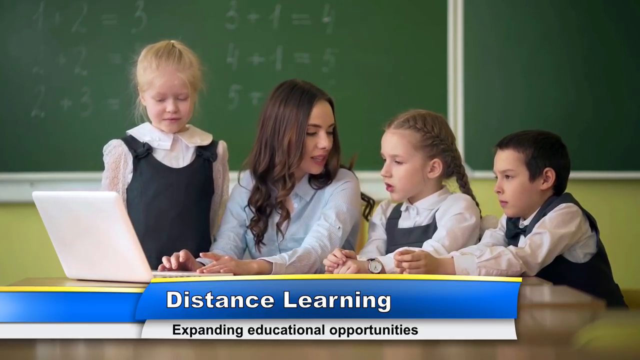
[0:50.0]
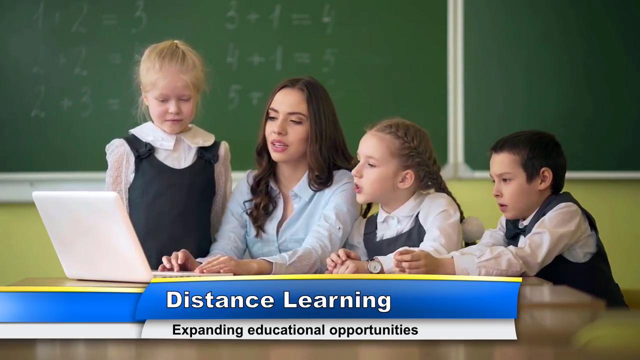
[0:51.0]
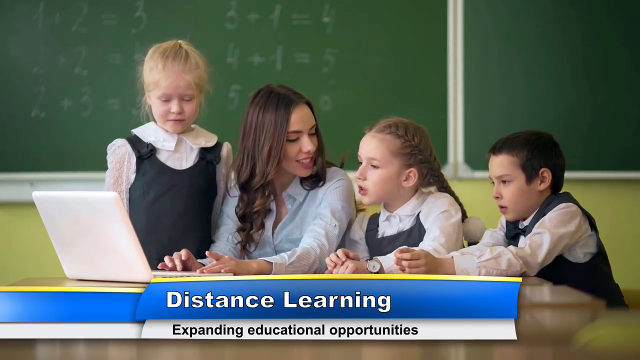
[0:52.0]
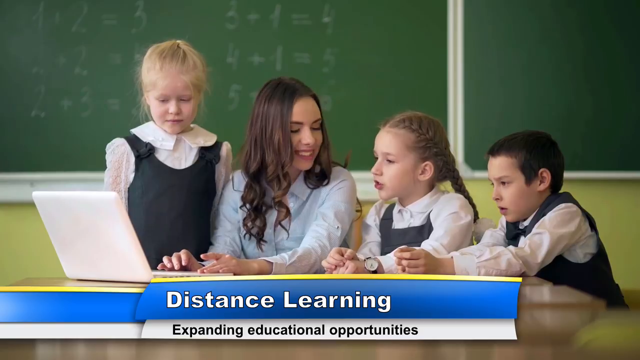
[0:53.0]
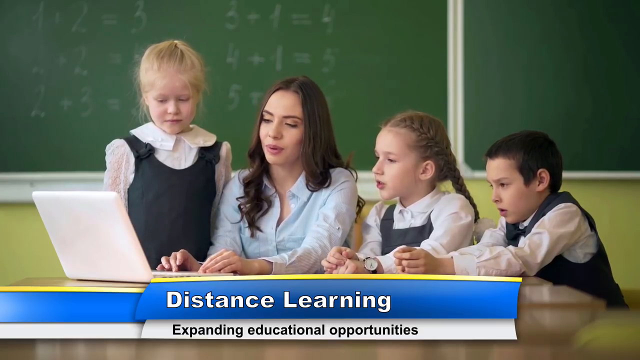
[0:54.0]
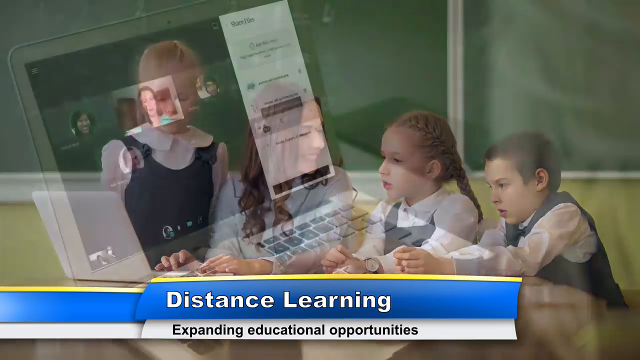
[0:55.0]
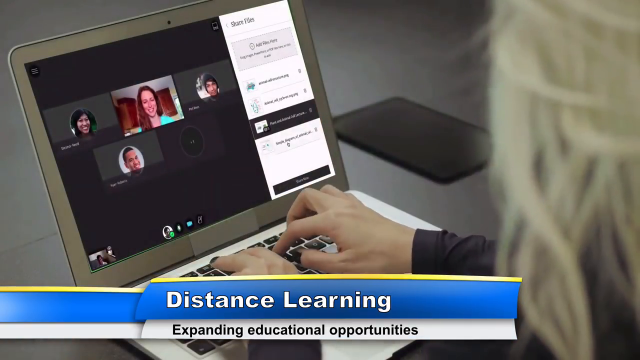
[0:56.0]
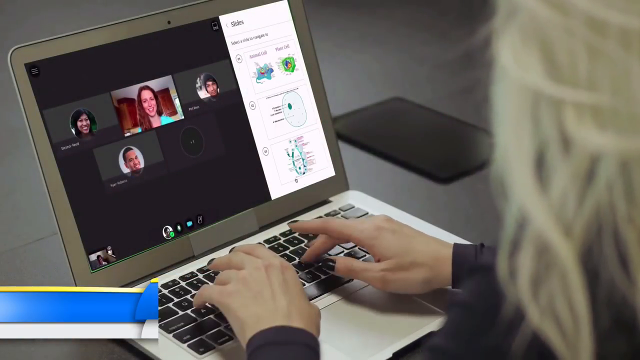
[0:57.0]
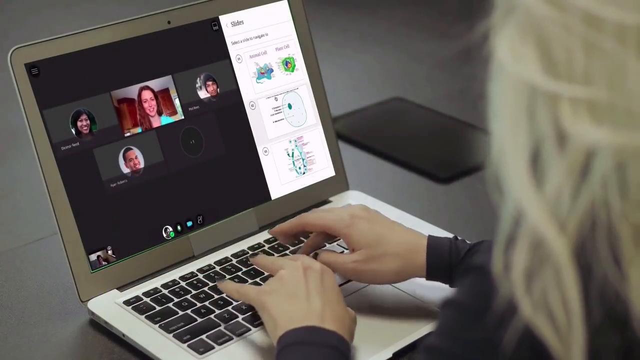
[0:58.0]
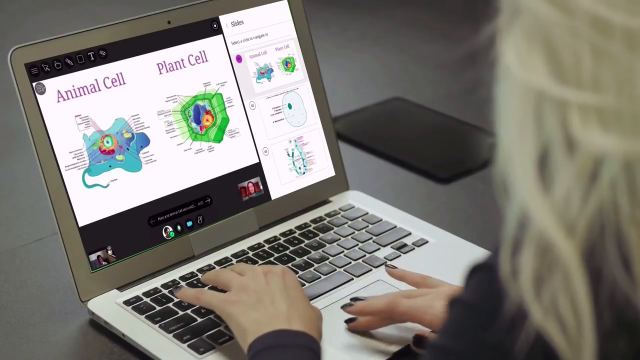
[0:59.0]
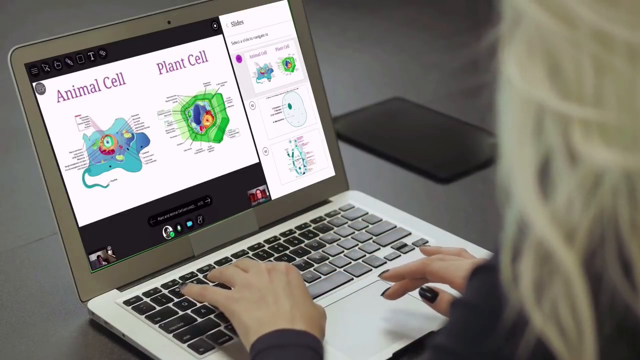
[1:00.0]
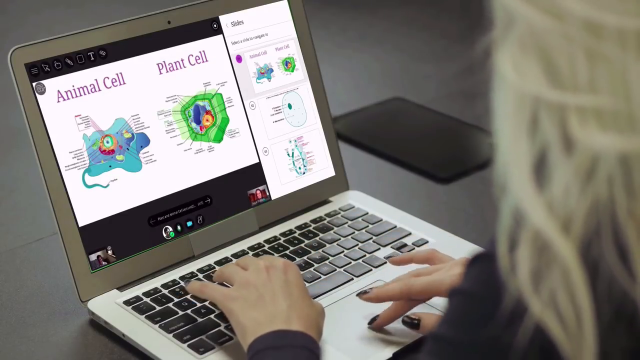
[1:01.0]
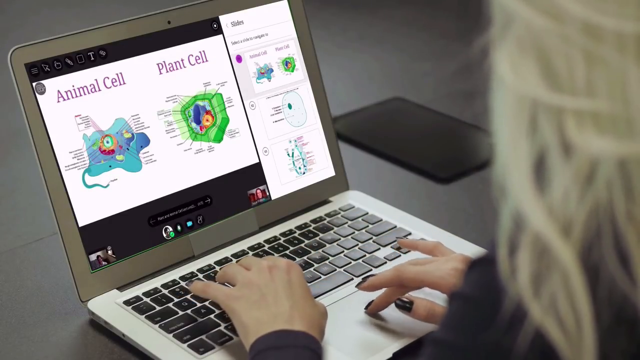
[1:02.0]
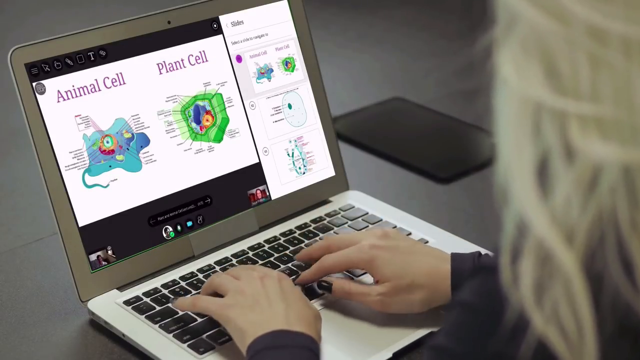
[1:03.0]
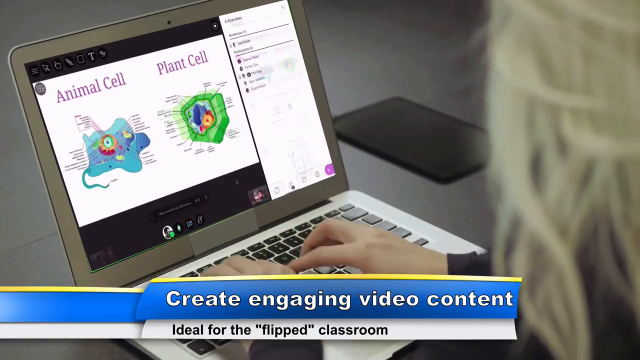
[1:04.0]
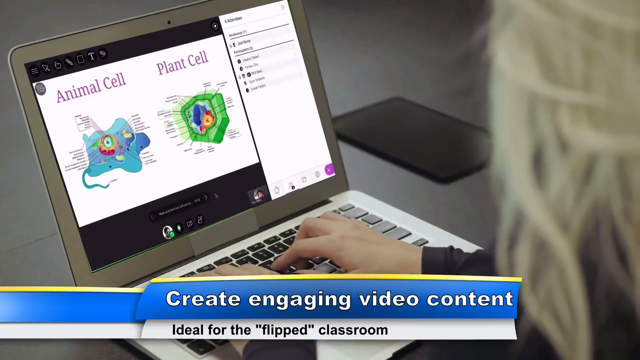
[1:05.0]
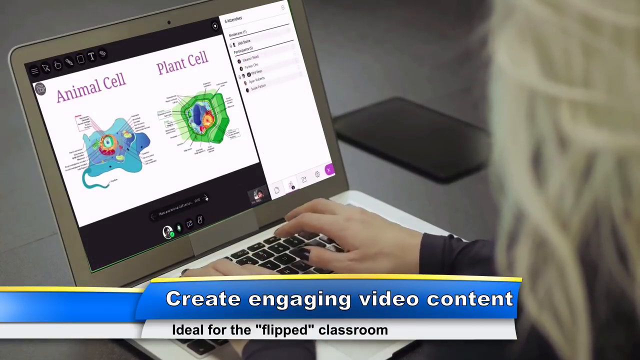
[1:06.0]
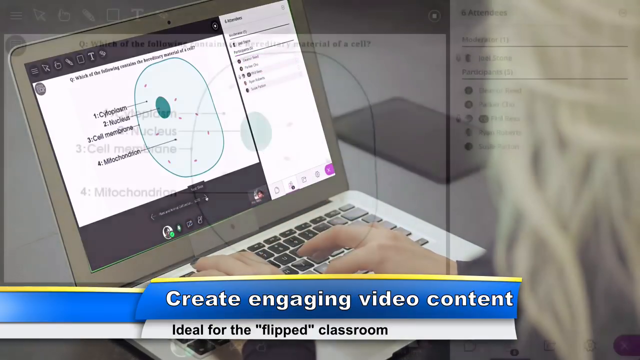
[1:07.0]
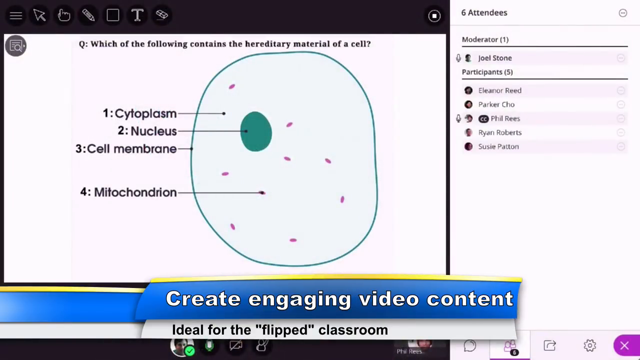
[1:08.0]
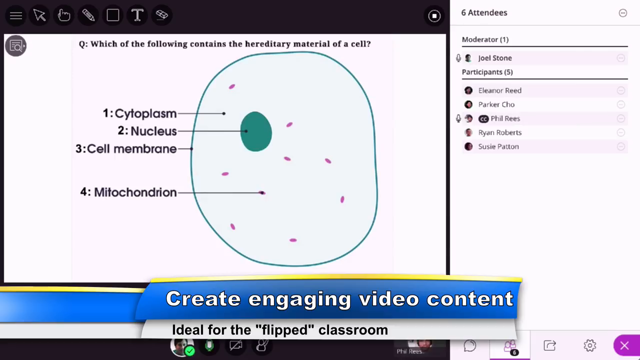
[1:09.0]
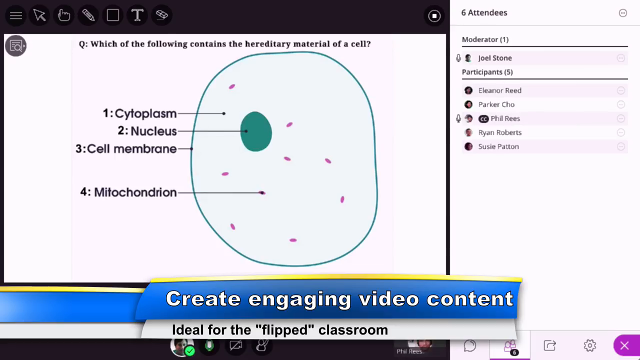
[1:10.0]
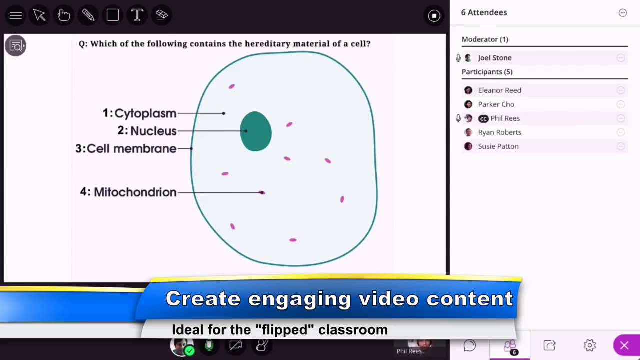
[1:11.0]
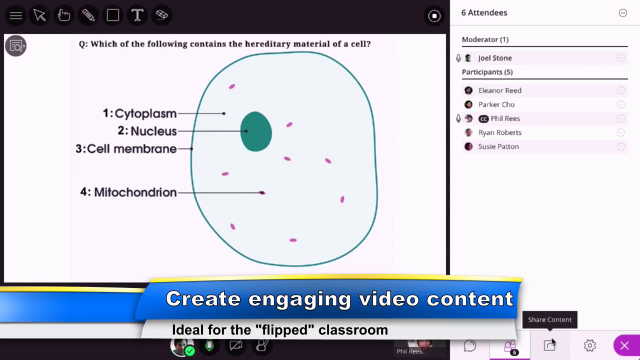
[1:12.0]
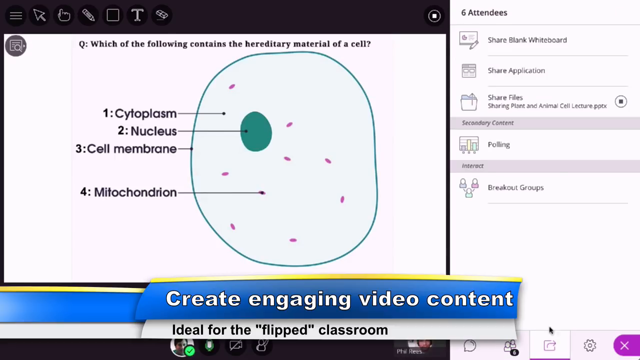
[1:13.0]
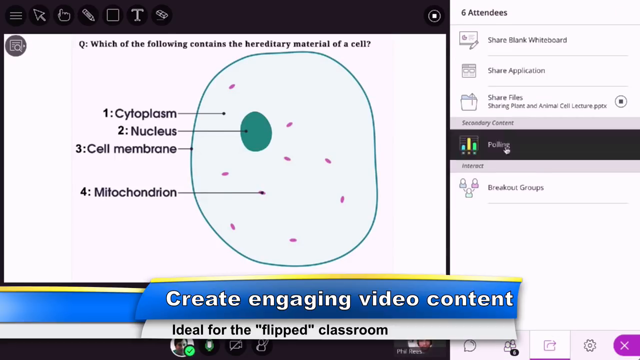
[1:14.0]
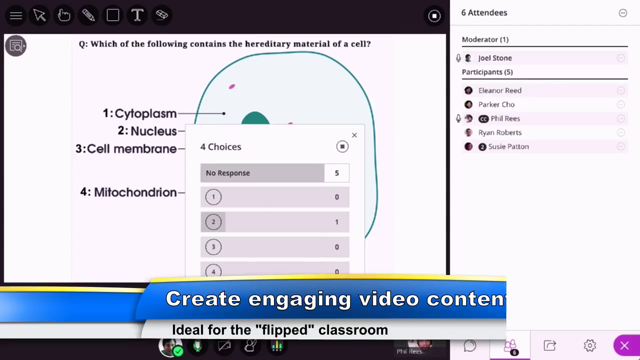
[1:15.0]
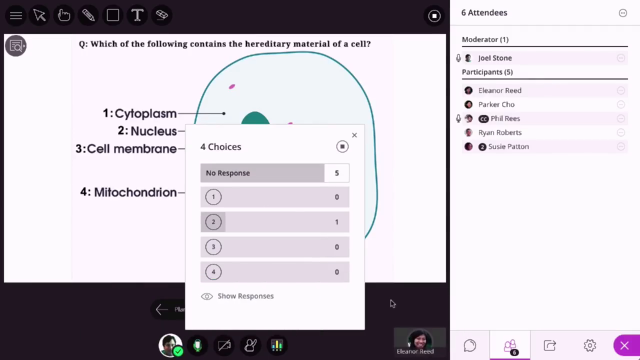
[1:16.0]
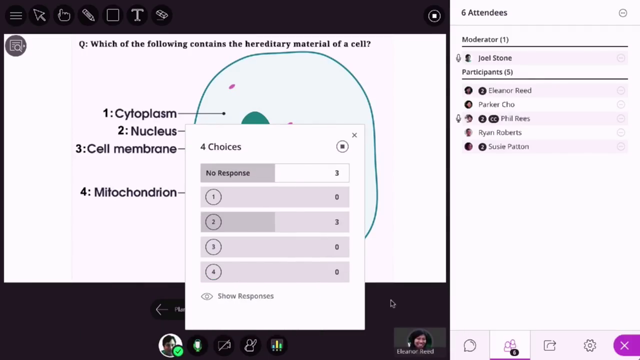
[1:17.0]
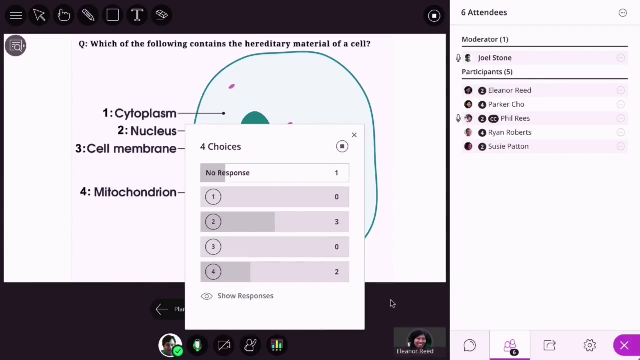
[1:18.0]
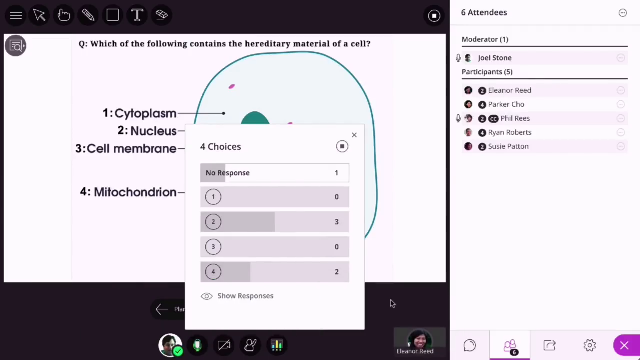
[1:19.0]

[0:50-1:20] The woman teacher sits at a desk on a laptop with her three students beside her, typing with both hands while looking to her left at the students. The next scene is a point-of-view shot of what looks like a woman typing on a laptop showing a Zoom meeting with four other people and a white screen on the right that says "slides." She updates a slide, using her right middle finger on the trackpad, then goes back to typing with both hands on the black keys. Text below reads "creating engaging video content," and below that "ideal for the flipped classroom." The view zooms in on a slide about a cell, labeling four different portions of it. On the right is the Zoom meeting's attendees list, with six in total. The user clicks a section called "share," then a section called "polling," and returns to the attendees list. The scene ends with the woman teacher shown sitting down.